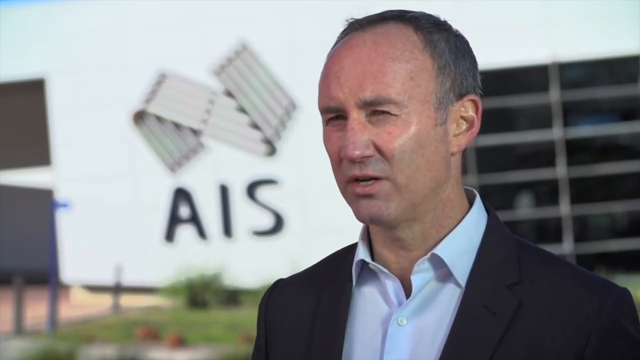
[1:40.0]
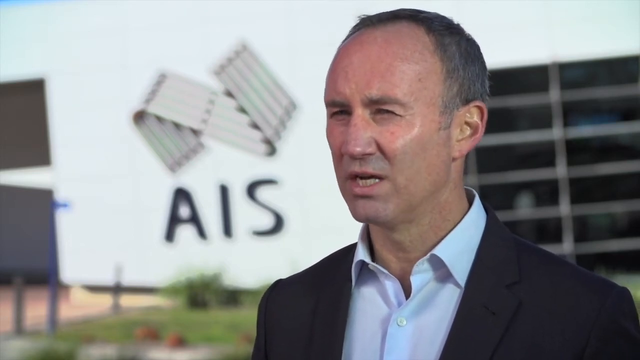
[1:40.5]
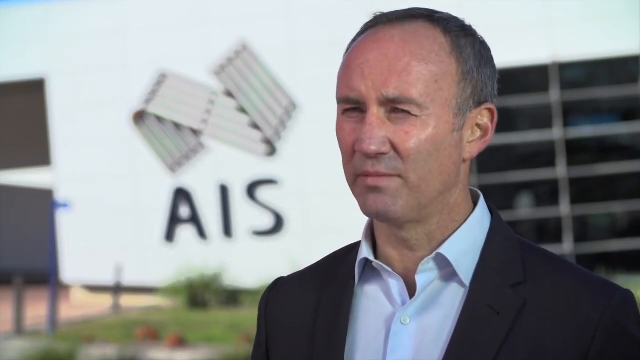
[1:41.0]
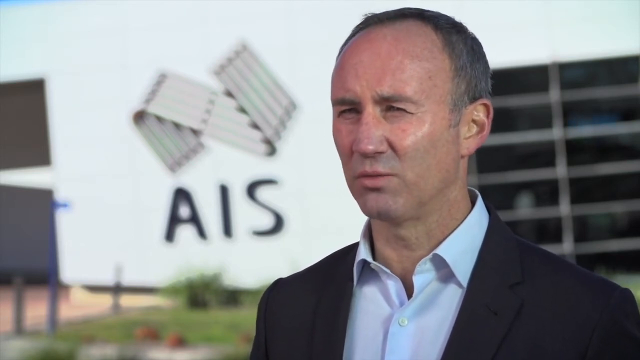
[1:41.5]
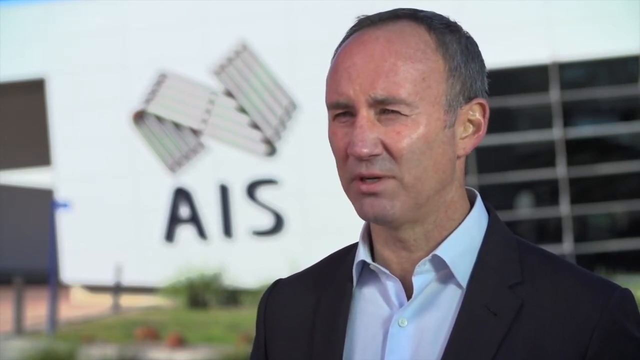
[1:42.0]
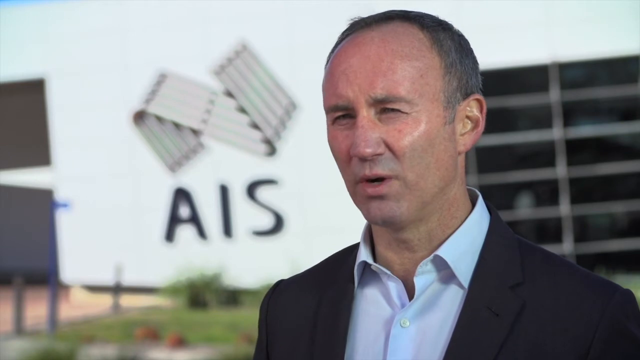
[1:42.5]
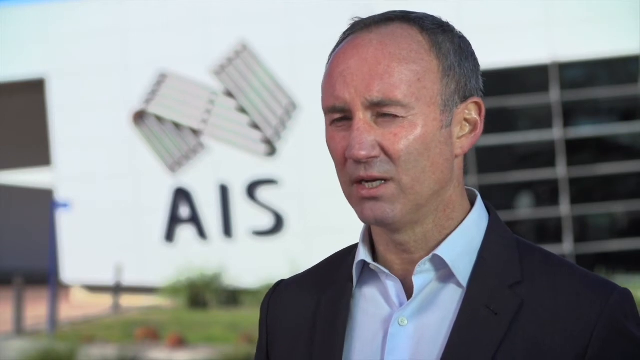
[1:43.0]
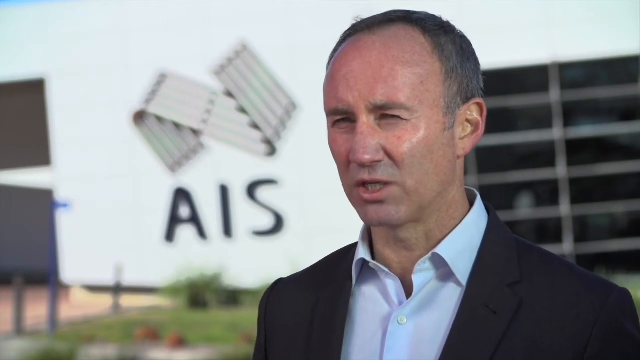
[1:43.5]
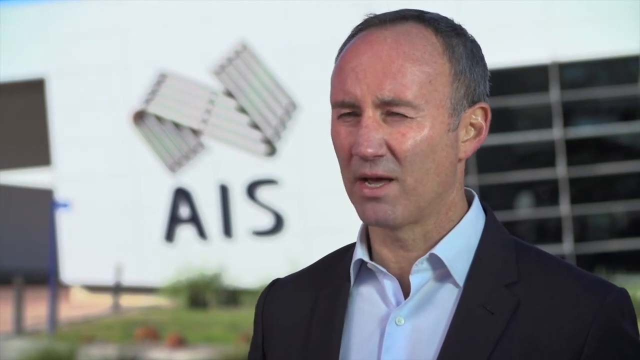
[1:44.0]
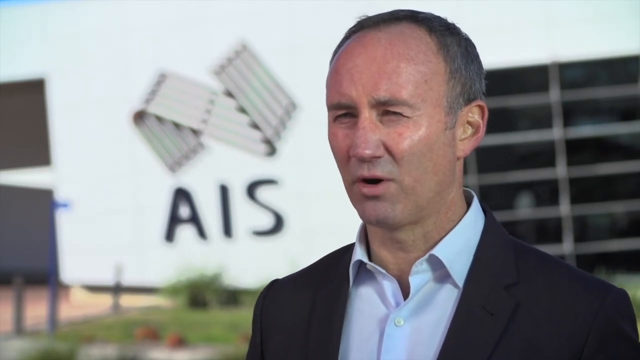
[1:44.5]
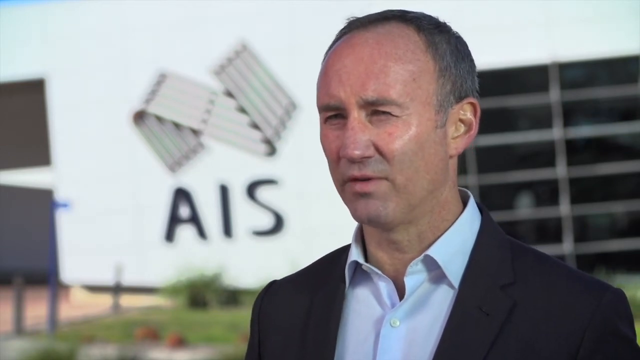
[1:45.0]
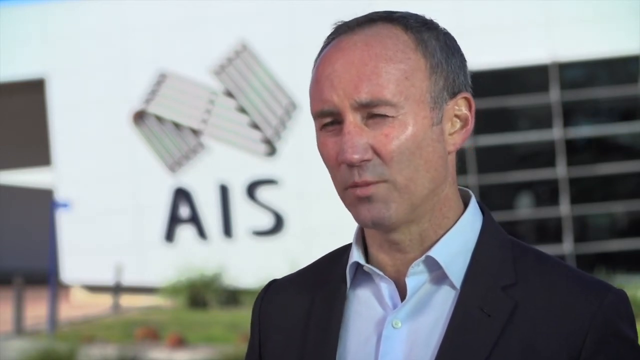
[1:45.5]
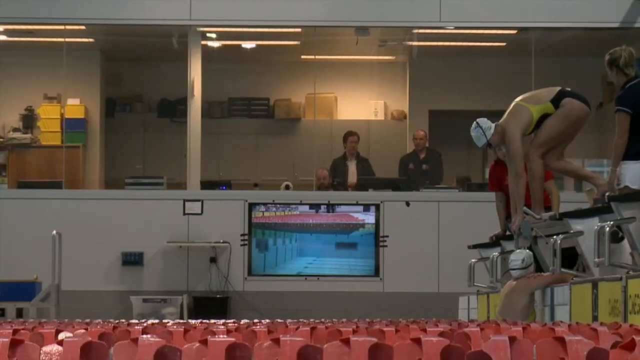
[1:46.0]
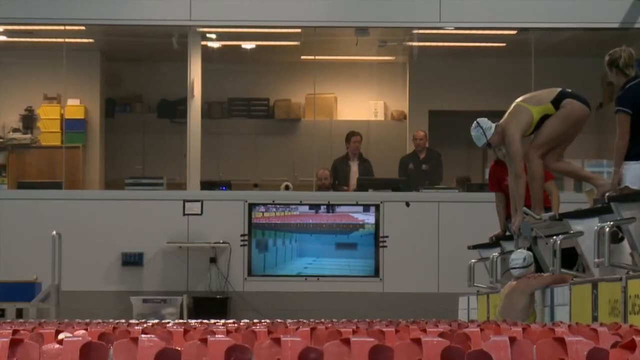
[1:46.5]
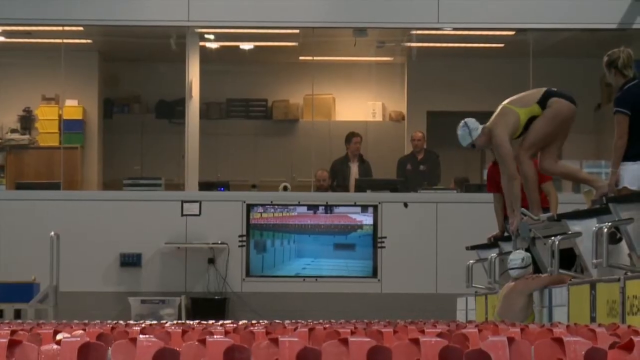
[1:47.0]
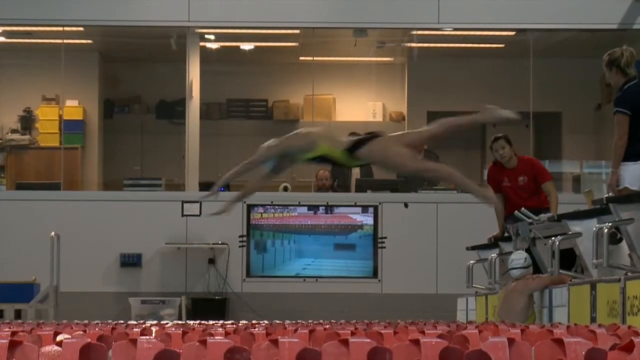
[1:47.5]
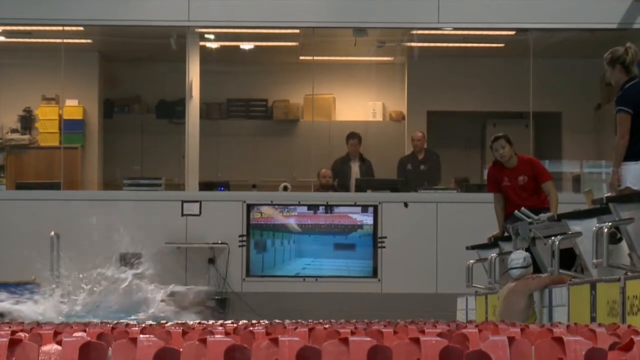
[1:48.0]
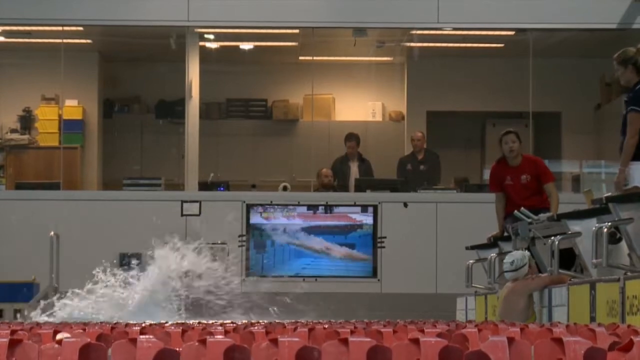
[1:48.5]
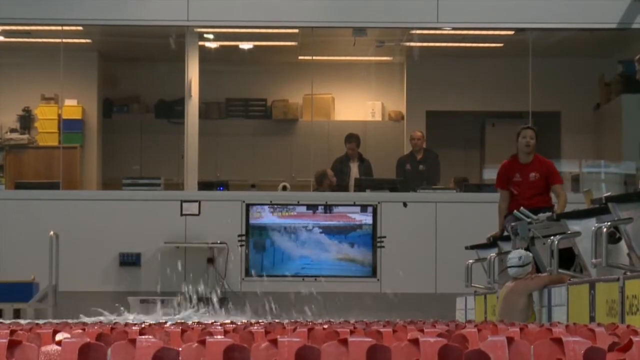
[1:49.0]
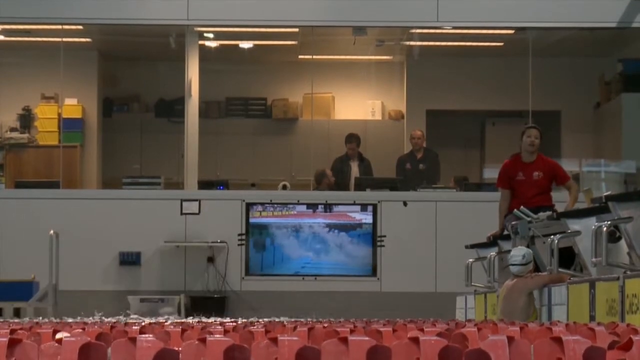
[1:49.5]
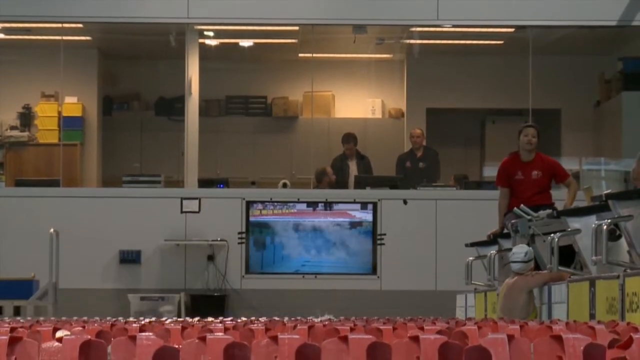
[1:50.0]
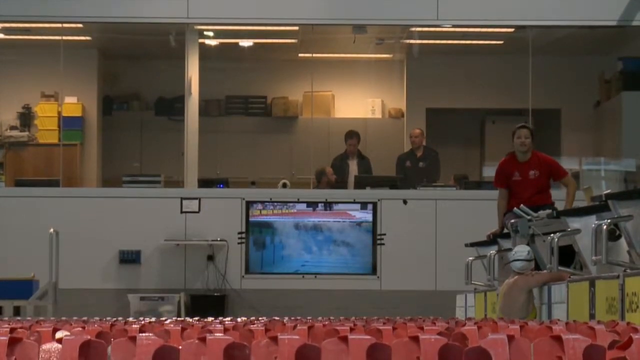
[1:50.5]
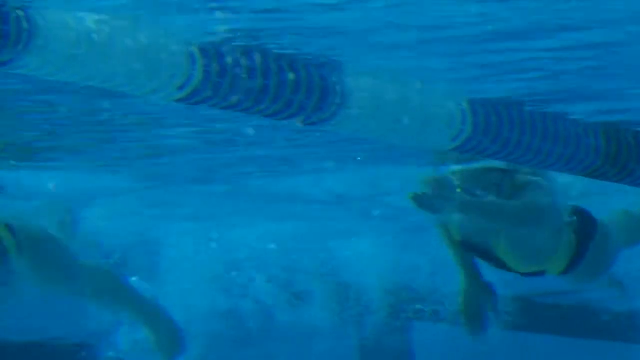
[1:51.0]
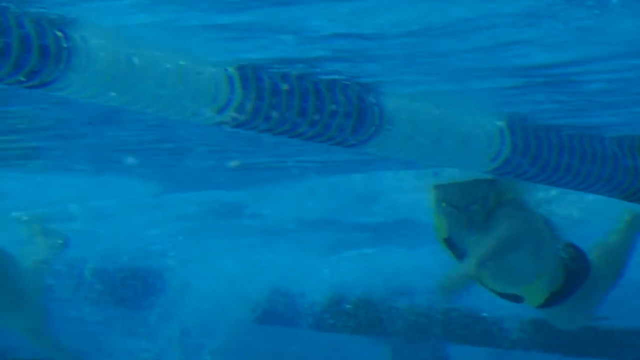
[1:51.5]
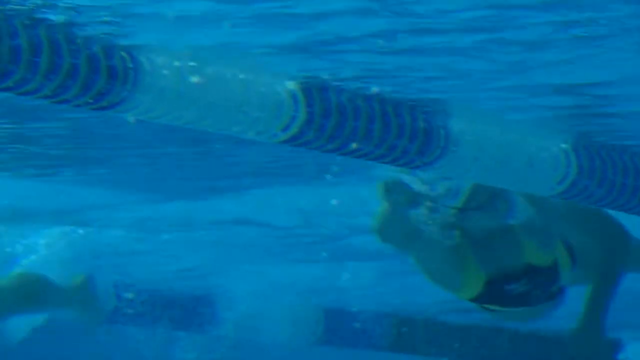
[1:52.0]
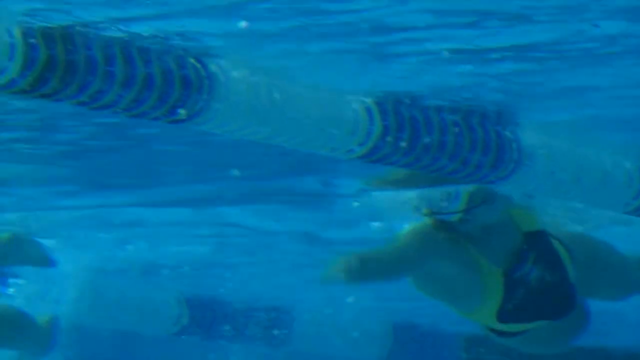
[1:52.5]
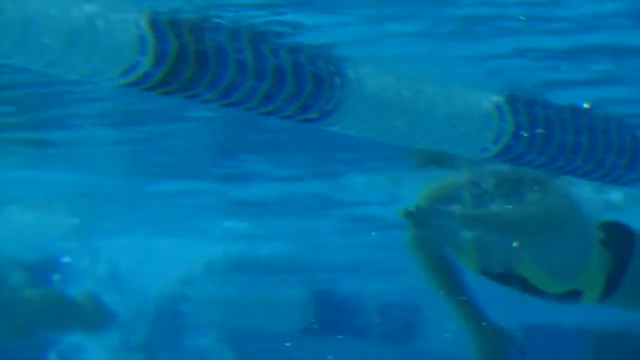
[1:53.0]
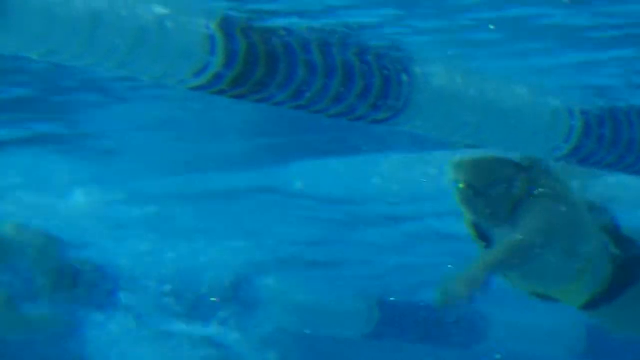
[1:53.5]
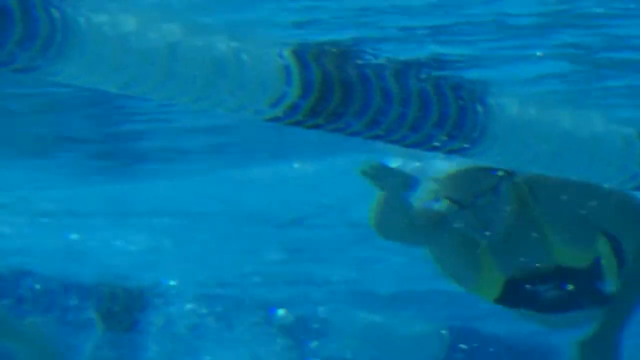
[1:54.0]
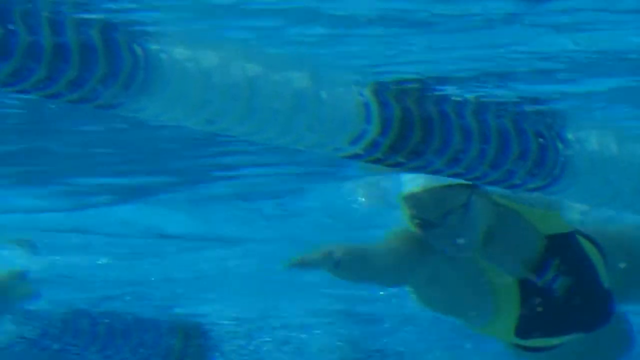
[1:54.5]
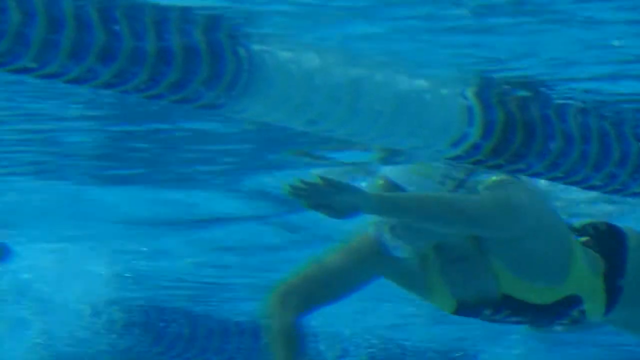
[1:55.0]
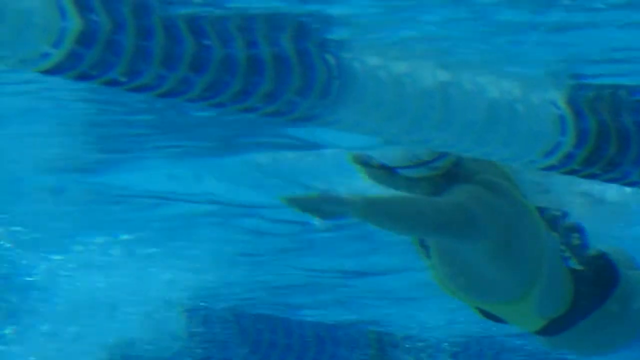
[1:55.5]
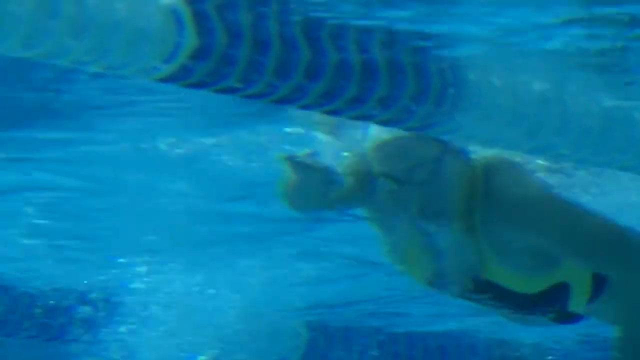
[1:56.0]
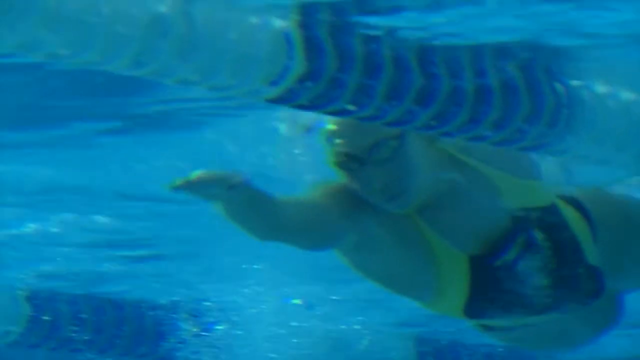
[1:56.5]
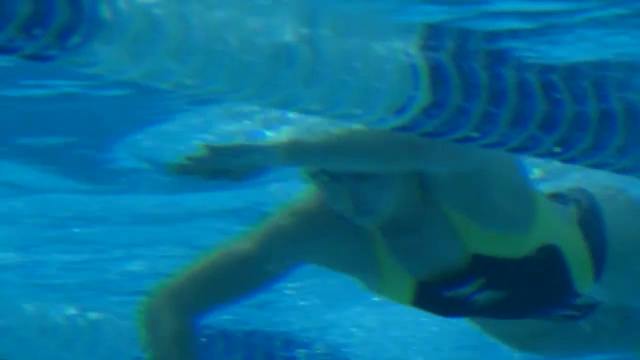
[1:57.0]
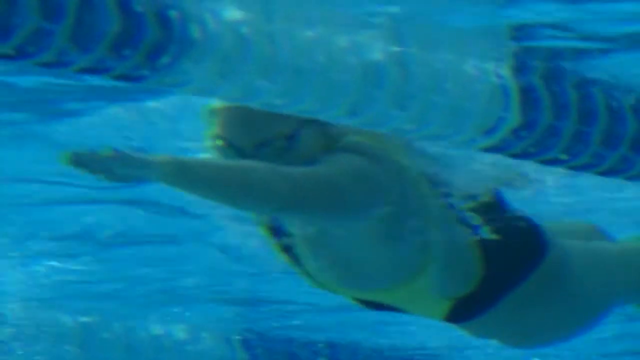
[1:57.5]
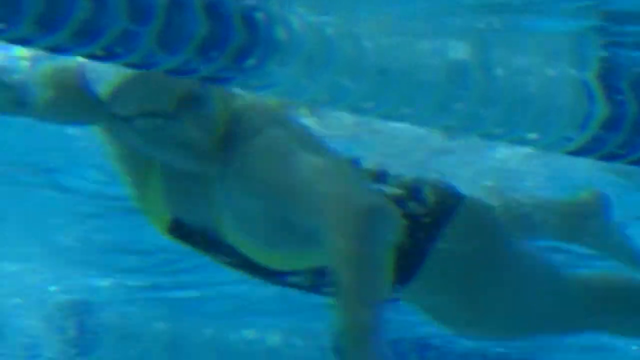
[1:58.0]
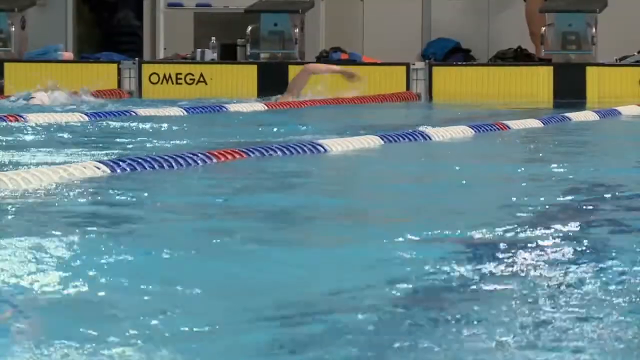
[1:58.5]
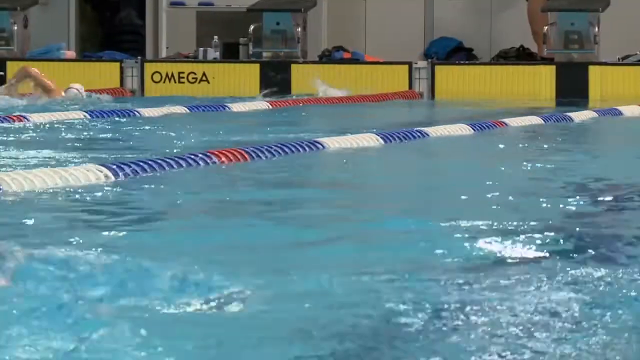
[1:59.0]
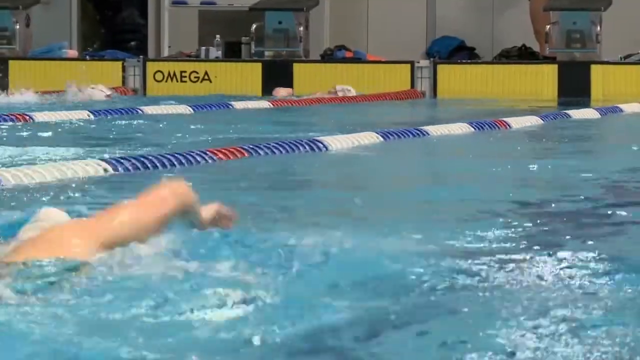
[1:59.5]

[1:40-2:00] The interview with the director of AIS continues. He is again standing, apparently outside, with a building in the background and a big AIS sign with the AIS logo, possibly the company's headquarters. He is Caucasian and wears a light blue collared shirt and a dark blue blazer. The scene shifts to a swimming competition: swimmers dressed in swimming competition attire stand at an Olympic-sized pool, dive into the water, and start swimming rapidly. The video then shifts back to the director.